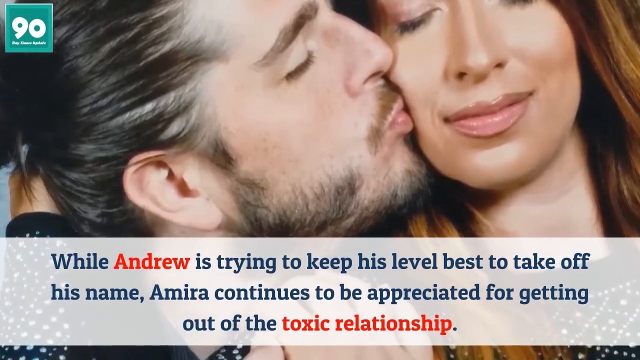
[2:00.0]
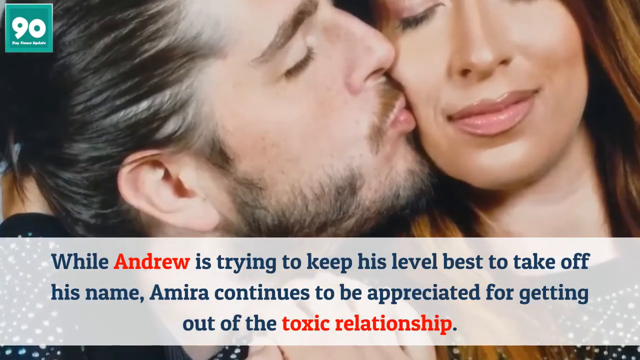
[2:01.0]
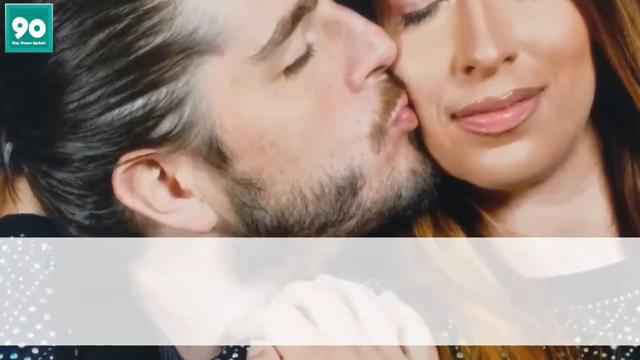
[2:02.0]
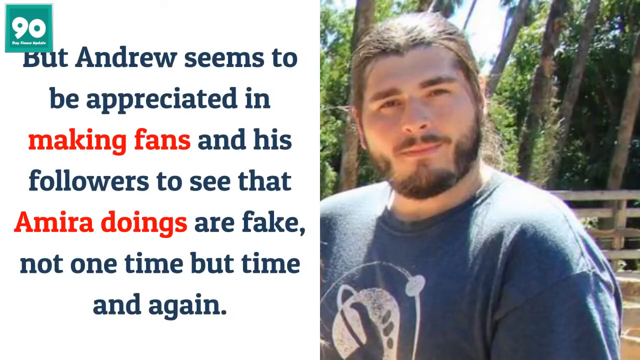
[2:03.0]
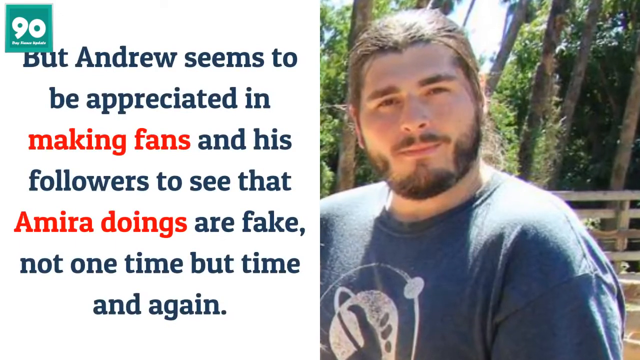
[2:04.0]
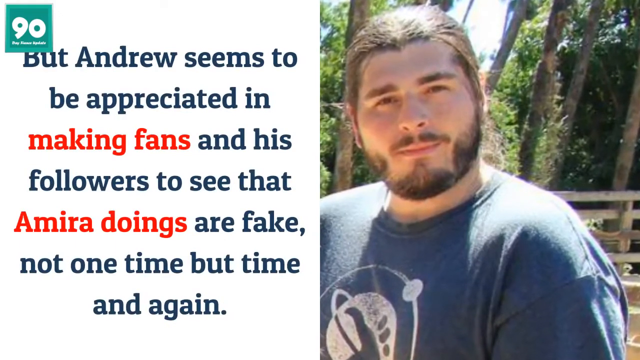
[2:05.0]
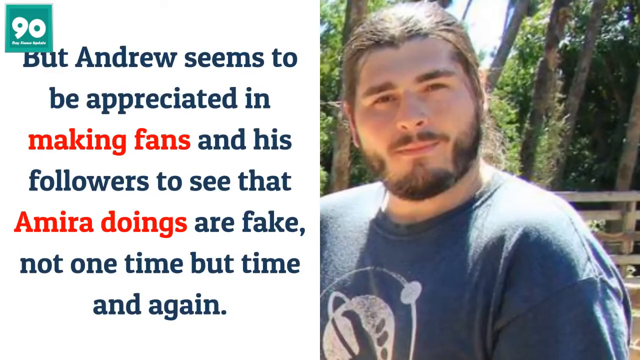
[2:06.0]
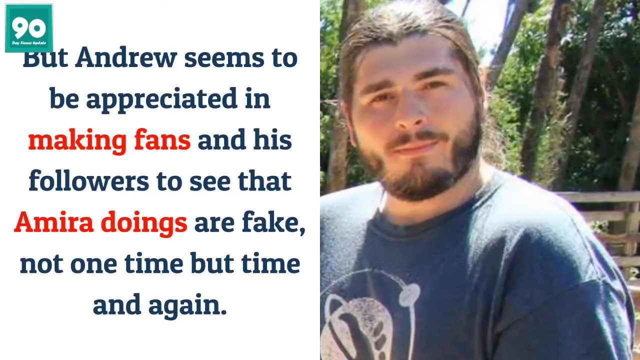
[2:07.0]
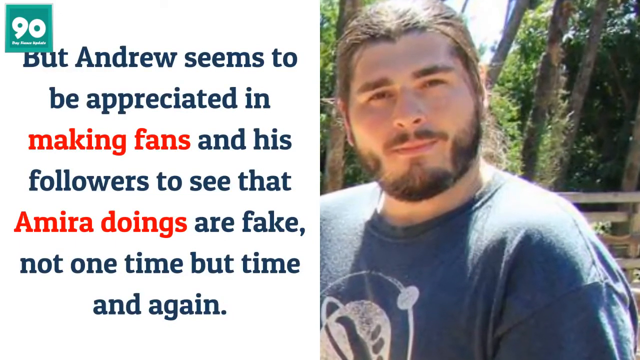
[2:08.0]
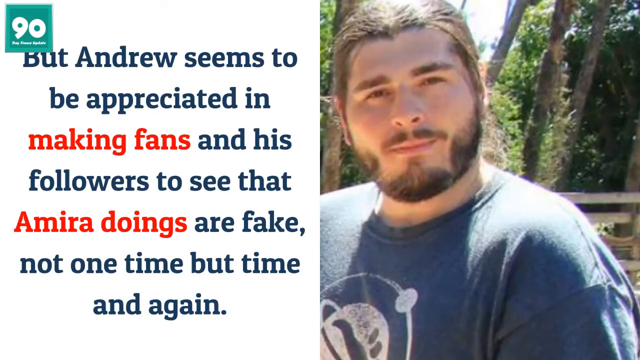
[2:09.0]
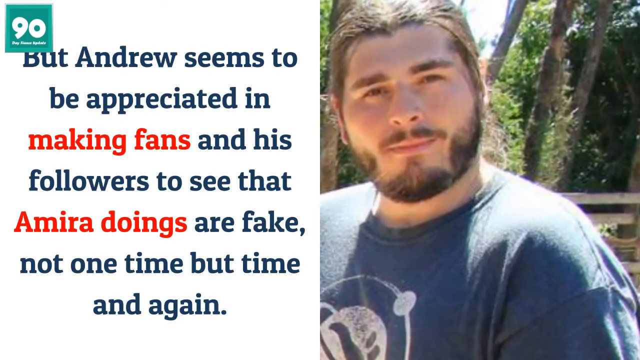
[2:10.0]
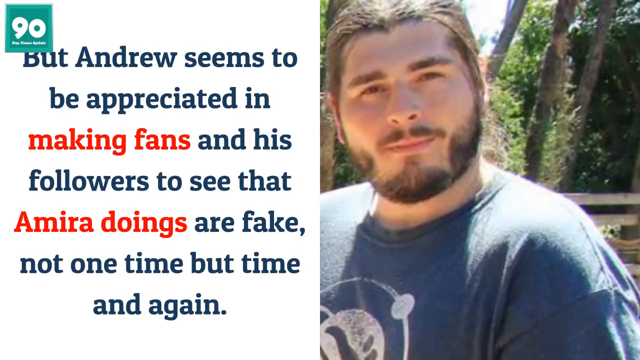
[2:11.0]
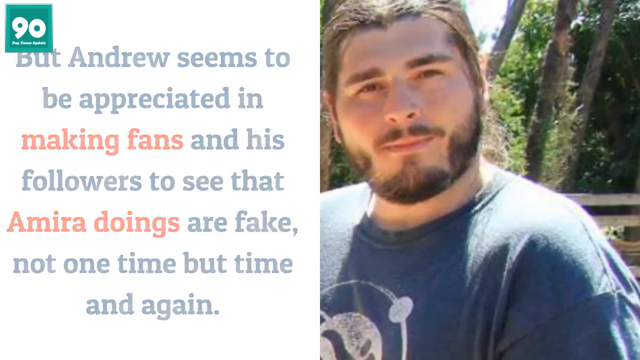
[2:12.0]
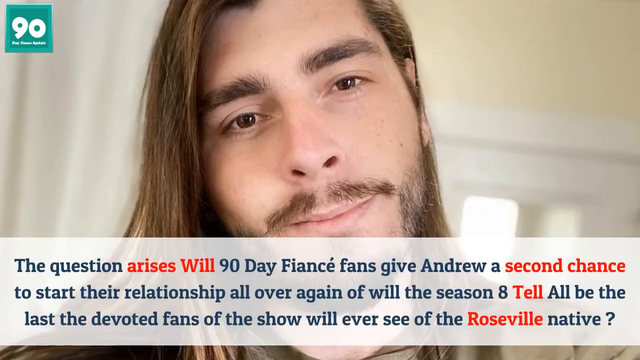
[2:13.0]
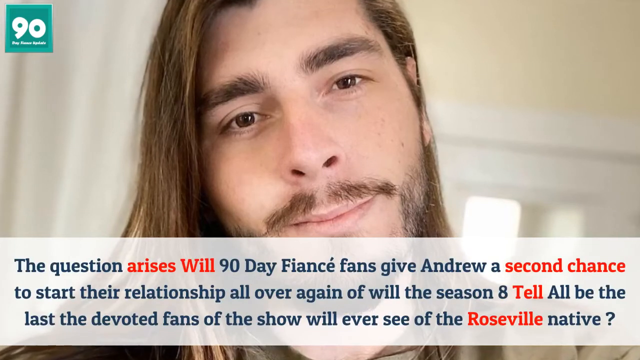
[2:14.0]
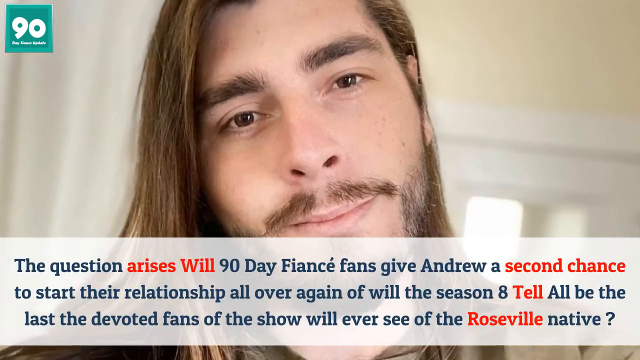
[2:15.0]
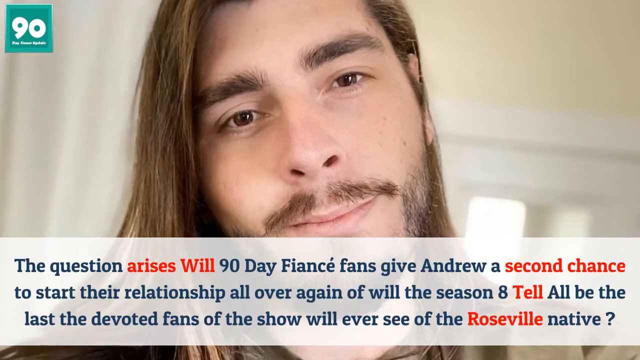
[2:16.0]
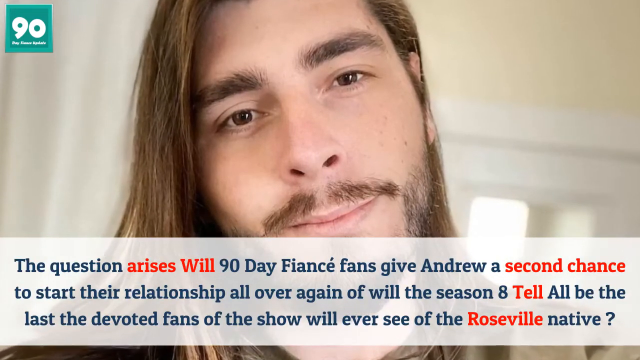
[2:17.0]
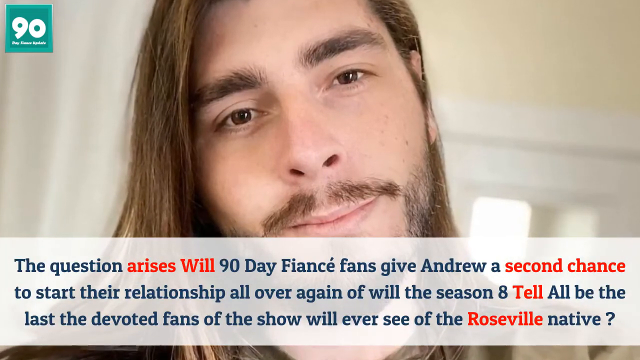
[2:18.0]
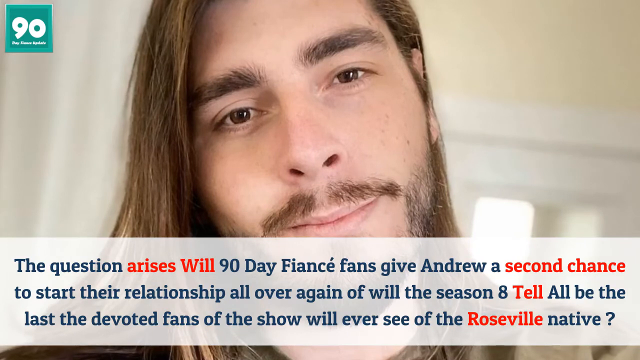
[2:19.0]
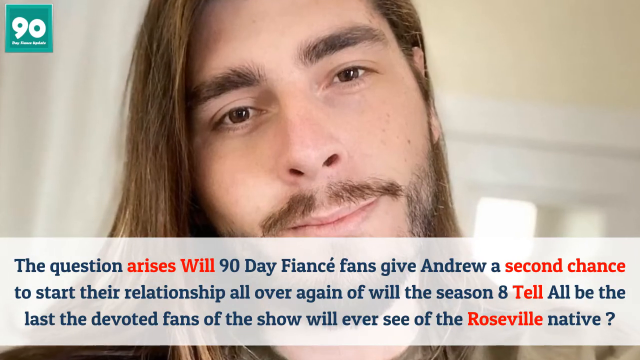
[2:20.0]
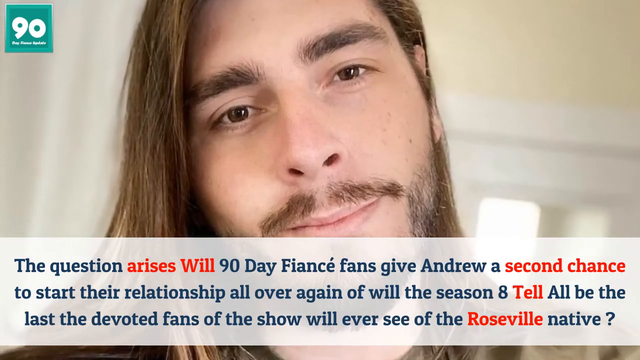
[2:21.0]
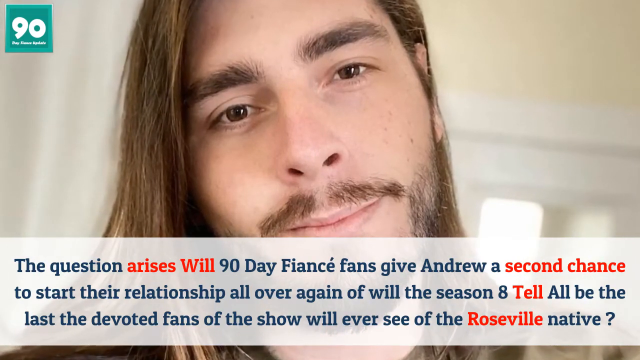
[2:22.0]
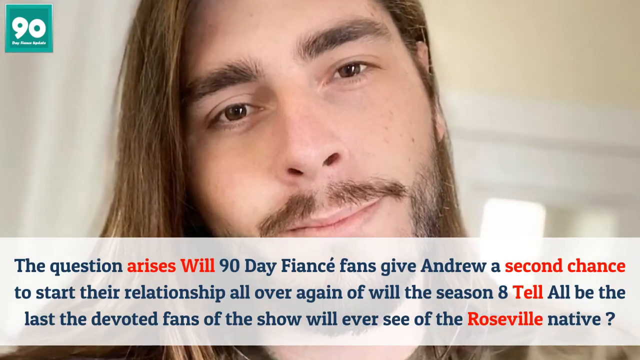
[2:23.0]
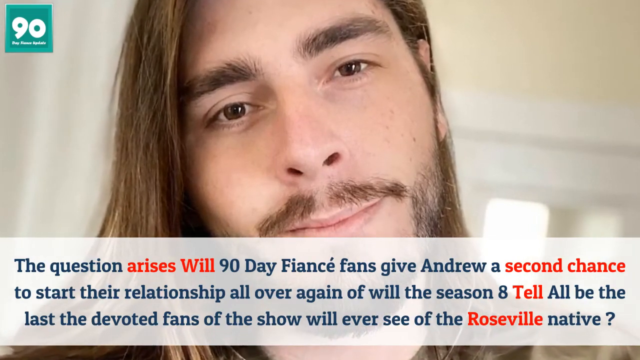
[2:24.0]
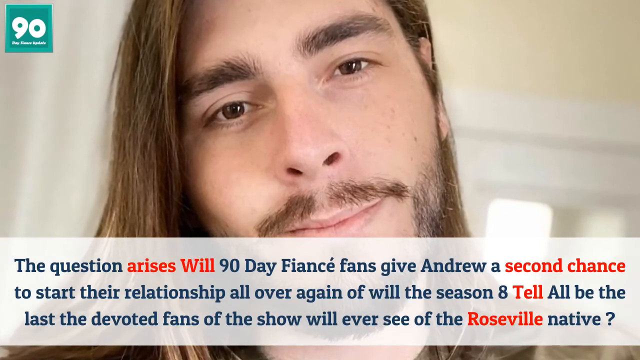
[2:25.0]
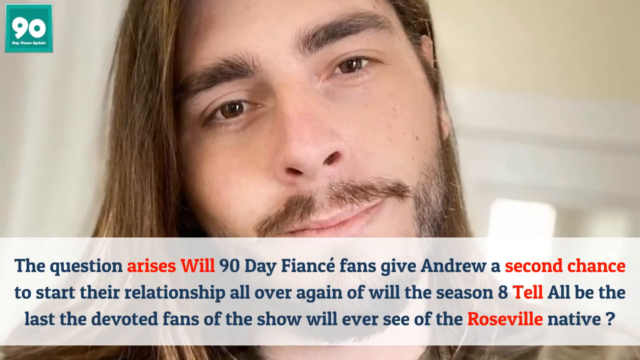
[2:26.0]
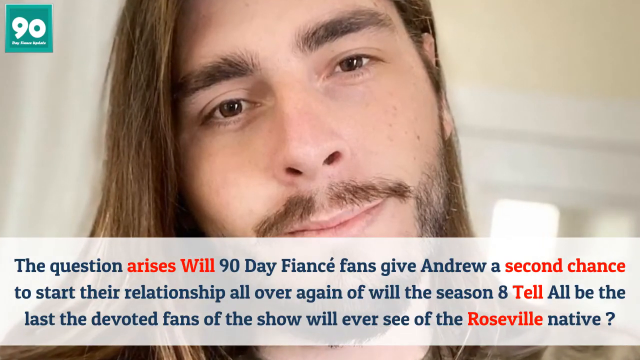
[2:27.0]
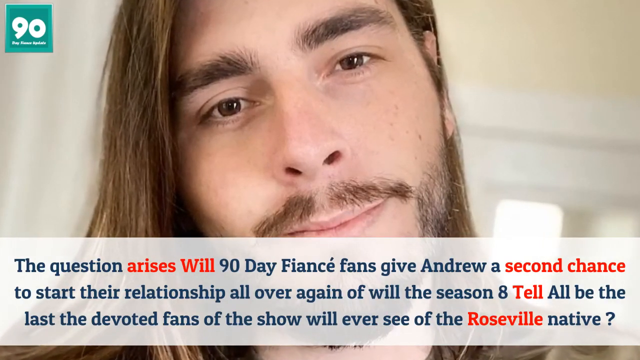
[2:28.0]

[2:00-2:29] The picture of Andrew kissing Amira on the cheek remains on screen. Next, Andrew is shown standing outside in a dark blue shirt in front of a wooden fence, with tree trunks and green tree leaves in the background on what looks like a bright sunny day. The caption to the left of the image says "But Andrew seems to be appreciated in his making fans and his followers to see that Amira doings are fake, not one time, but time and again." The camera slowly zooms in on the image, then cuts to another image of Andrew with a caption on top: "The question arises, will 90 Day Fiance fans give Andrew a second chance to start their relationship all over again? Or will the season 8 tell all be the last the devoted fans of the show will ever see of the Roseville native?" The camera slowly zooms in on Andrew's face.